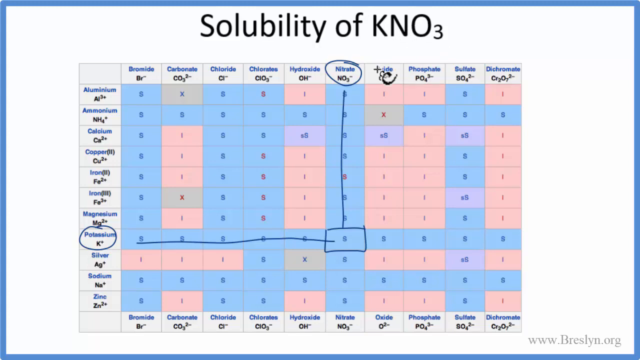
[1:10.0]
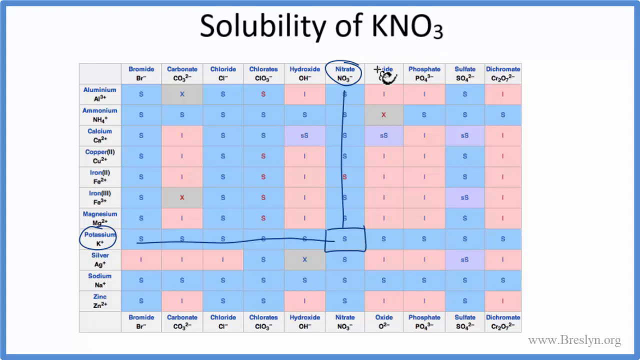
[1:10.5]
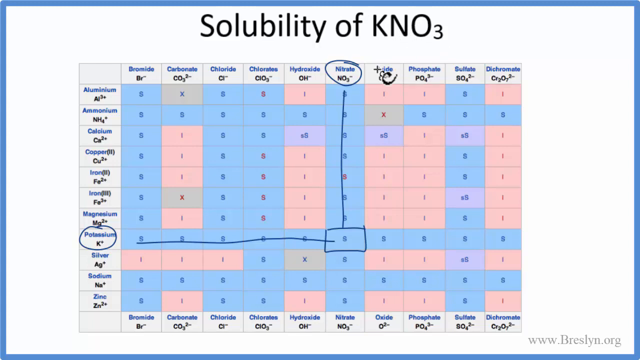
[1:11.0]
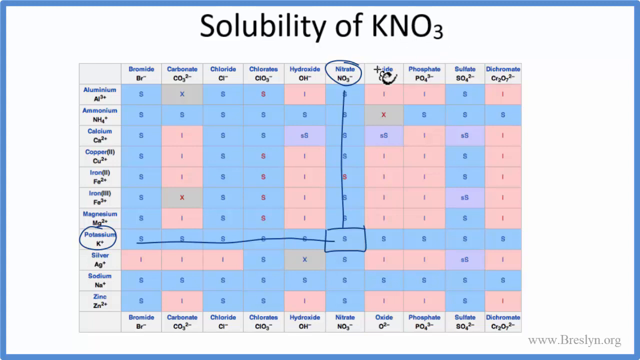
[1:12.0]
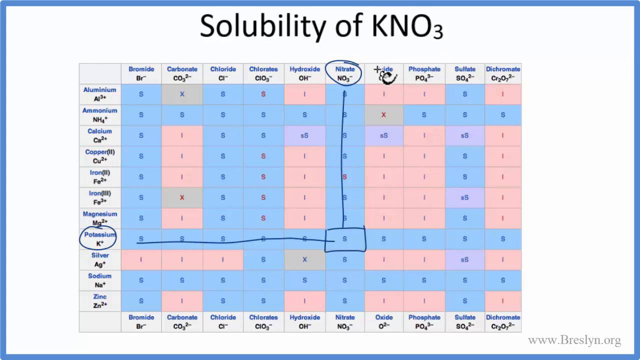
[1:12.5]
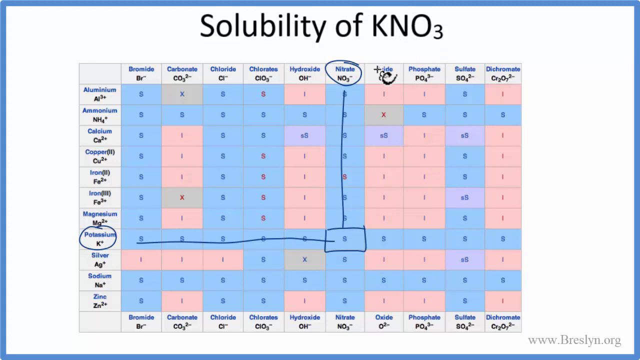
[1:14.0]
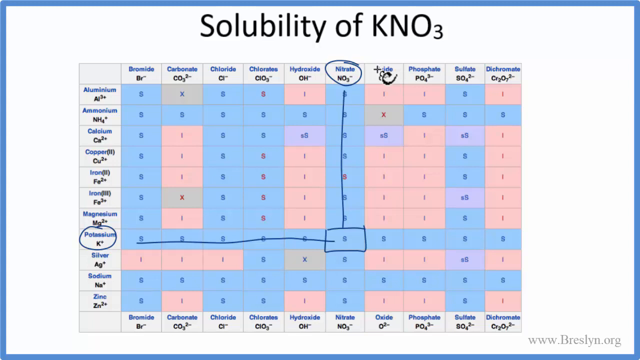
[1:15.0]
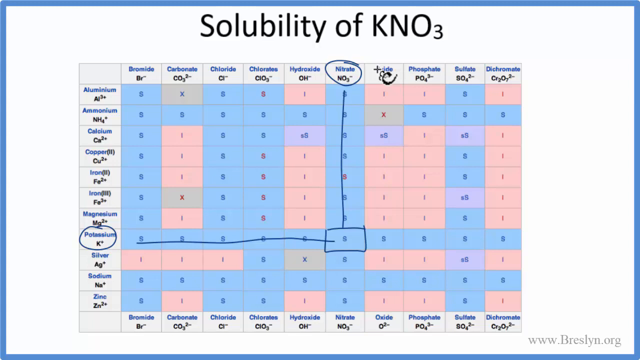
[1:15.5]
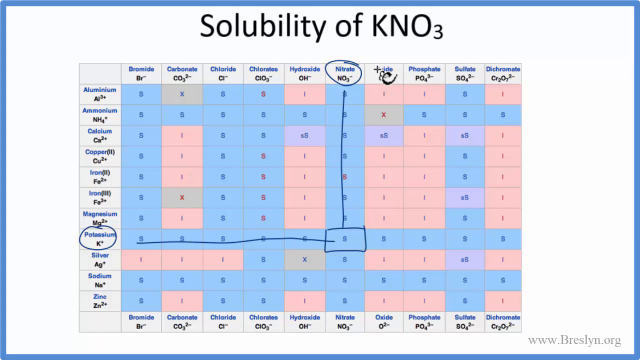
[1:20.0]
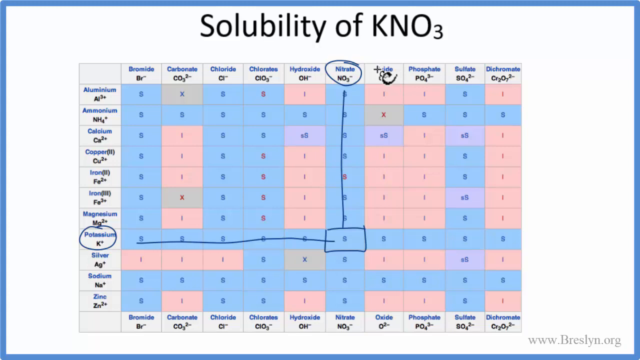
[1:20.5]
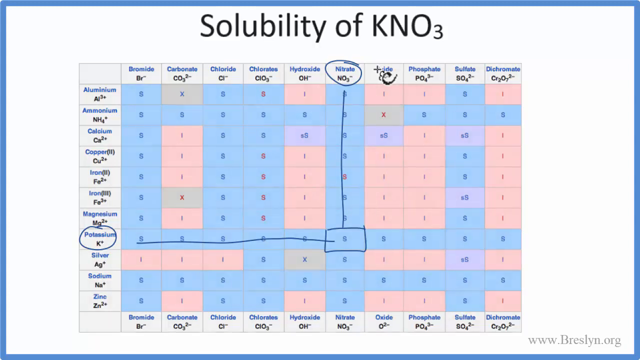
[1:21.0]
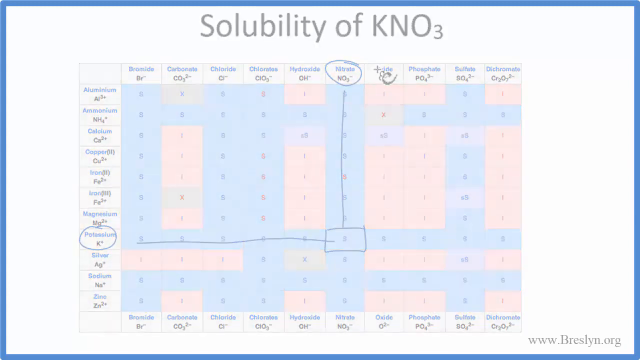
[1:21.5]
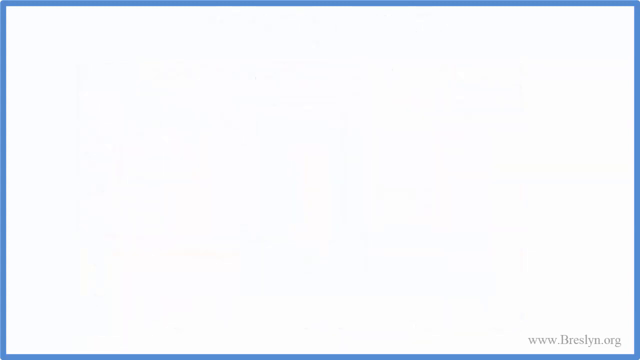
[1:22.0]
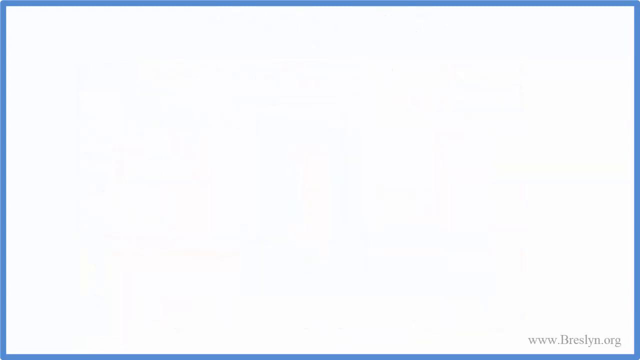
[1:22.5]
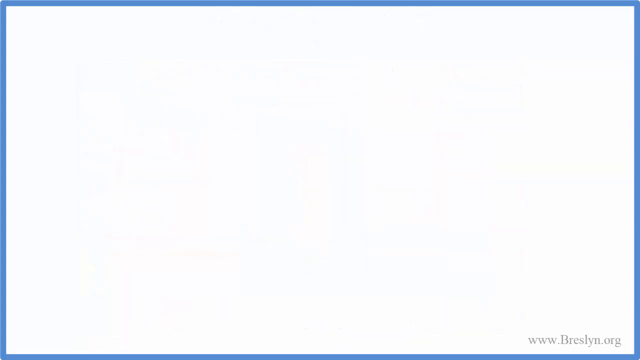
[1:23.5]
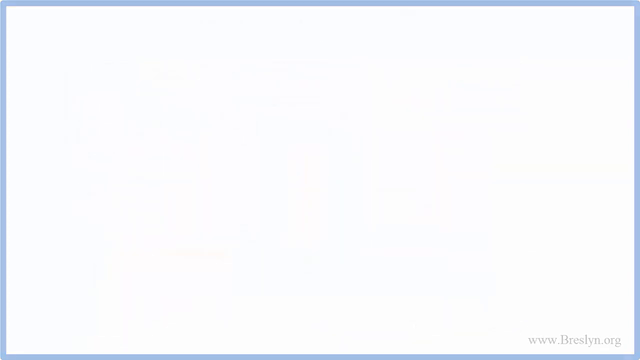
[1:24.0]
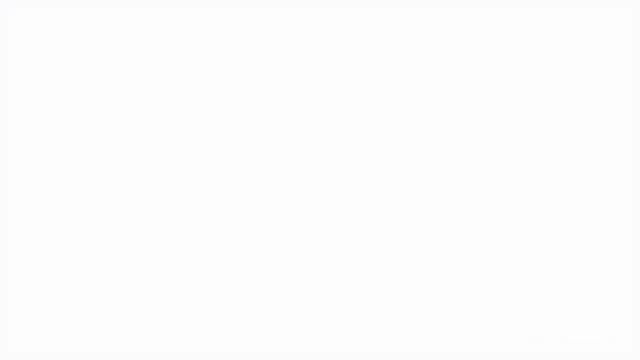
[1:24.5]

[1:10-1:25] The title reads "solubility of KNO3" above the chart, where some of the entries seem to end in "-ide." It looks like lines are drawn from the circles, meeting each other, and a box is drawn around something that may be a letter or a number. That then disappears and the screen goes white.